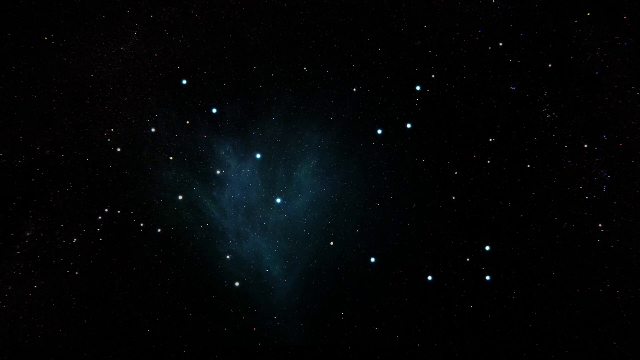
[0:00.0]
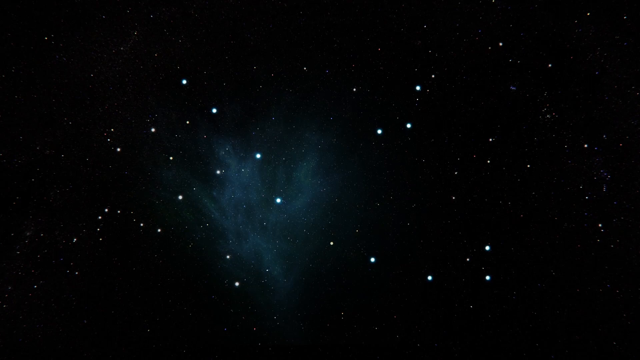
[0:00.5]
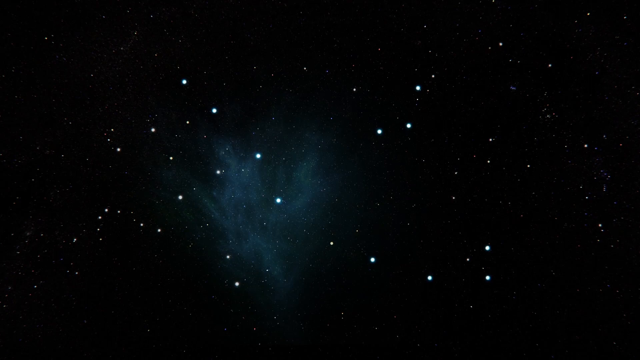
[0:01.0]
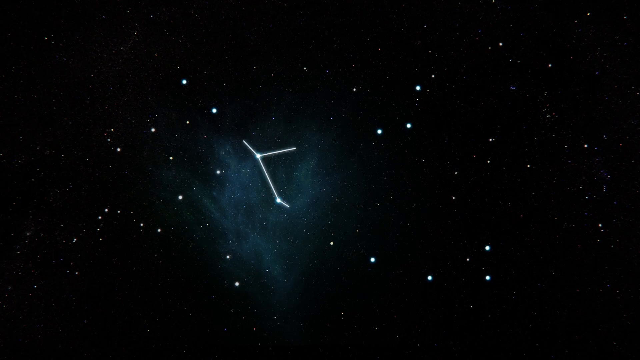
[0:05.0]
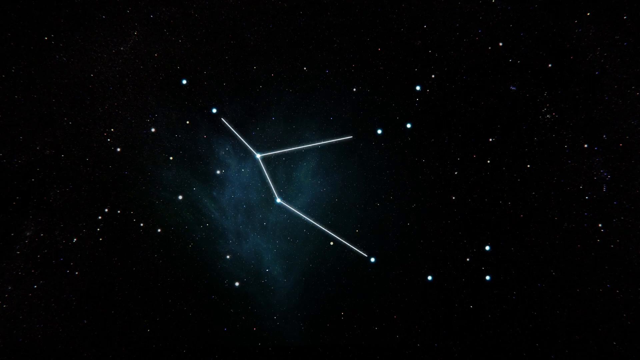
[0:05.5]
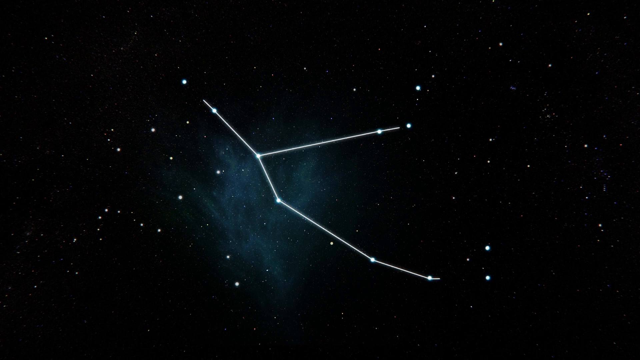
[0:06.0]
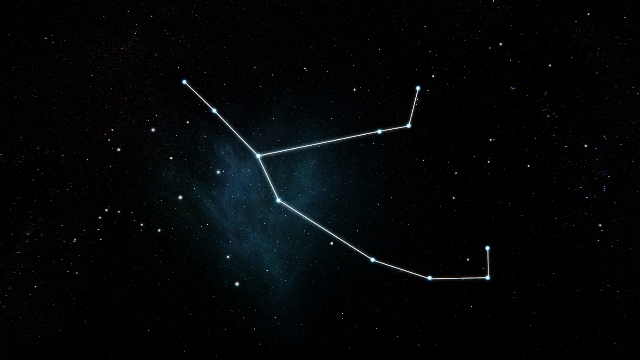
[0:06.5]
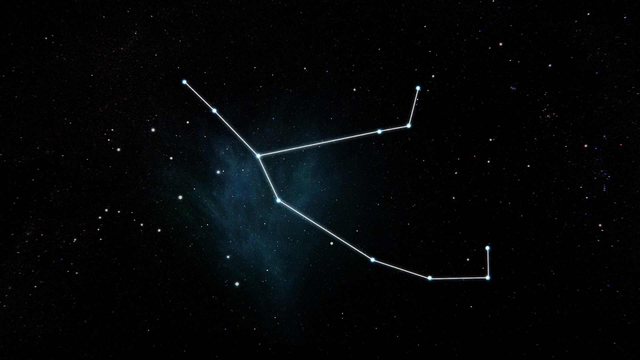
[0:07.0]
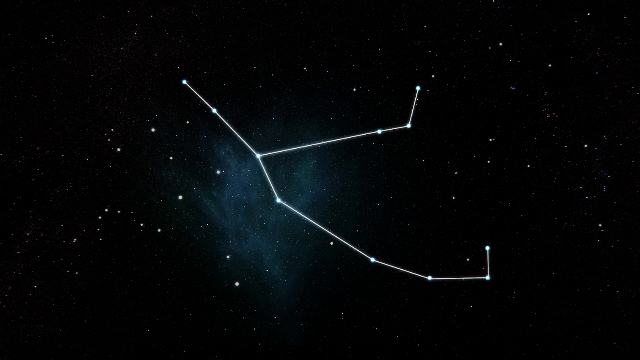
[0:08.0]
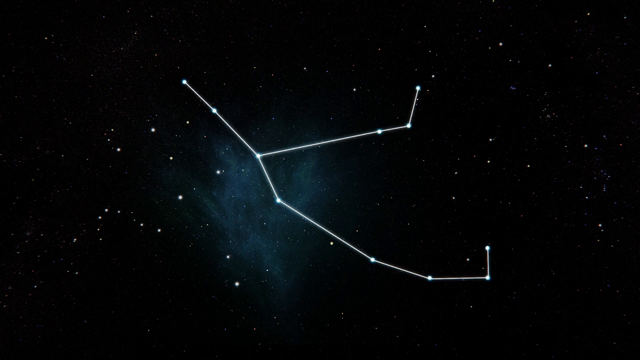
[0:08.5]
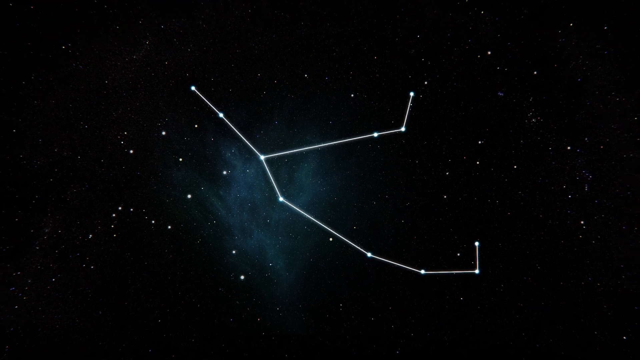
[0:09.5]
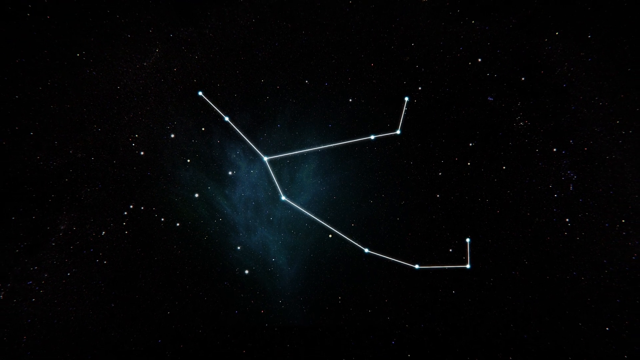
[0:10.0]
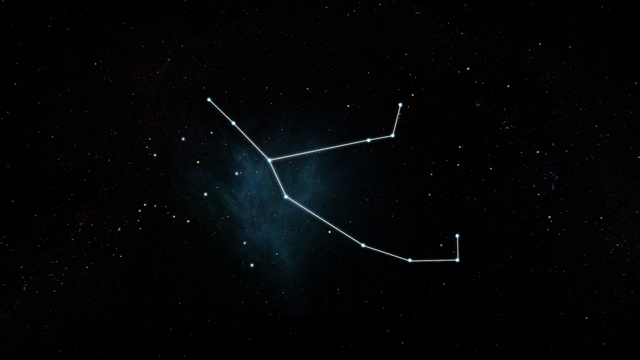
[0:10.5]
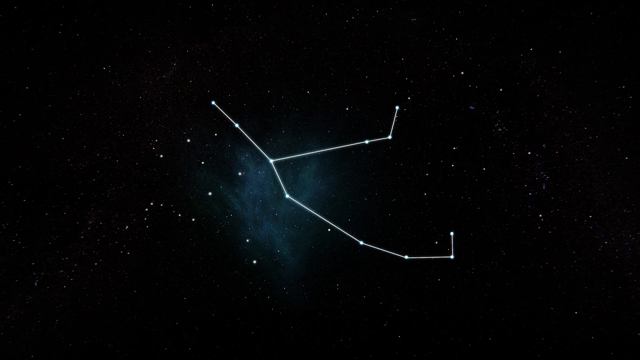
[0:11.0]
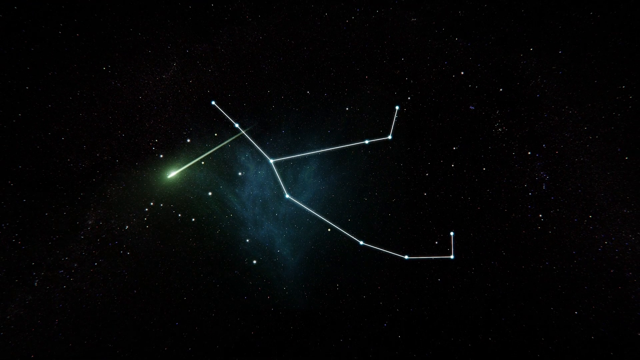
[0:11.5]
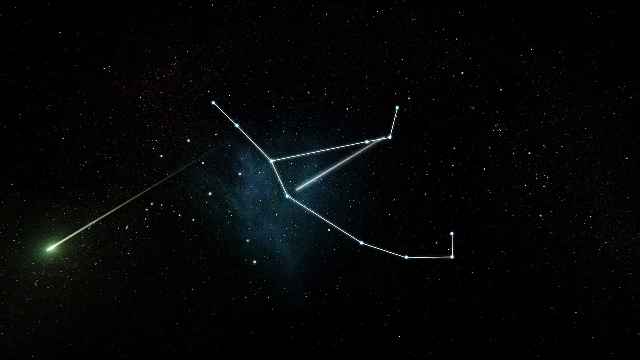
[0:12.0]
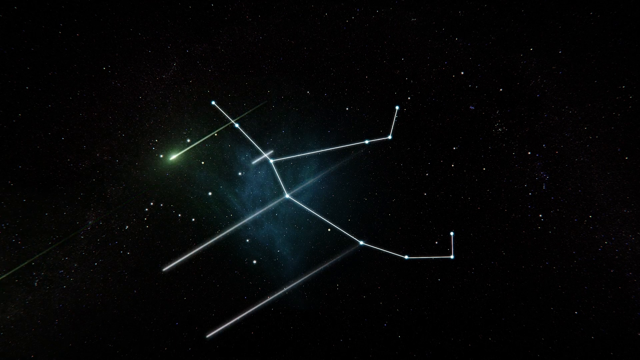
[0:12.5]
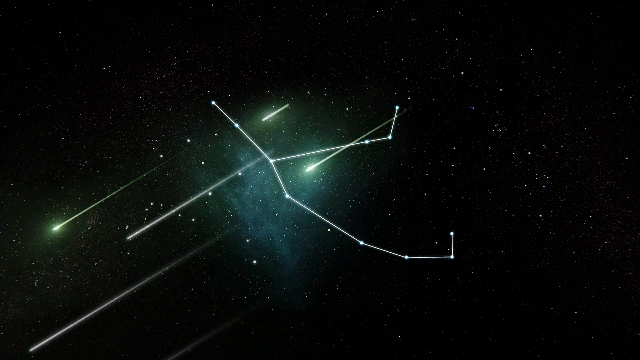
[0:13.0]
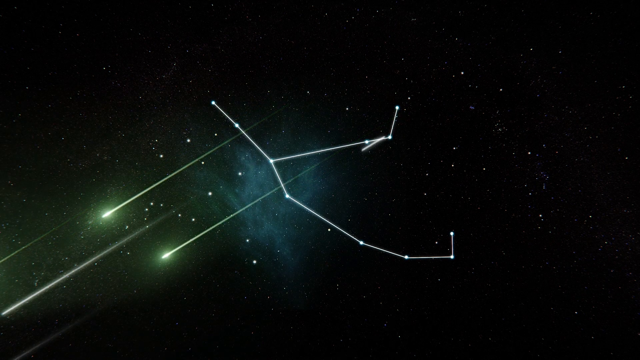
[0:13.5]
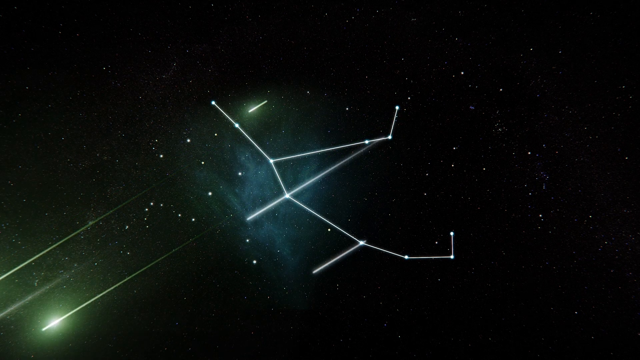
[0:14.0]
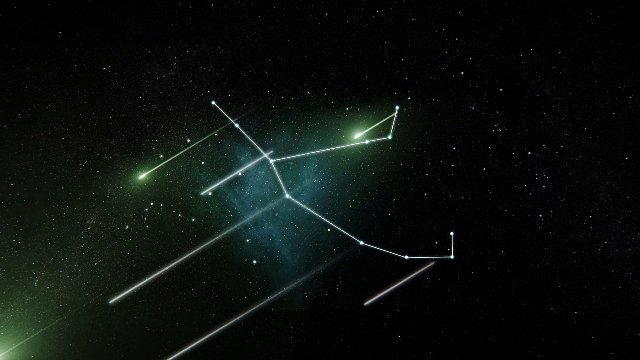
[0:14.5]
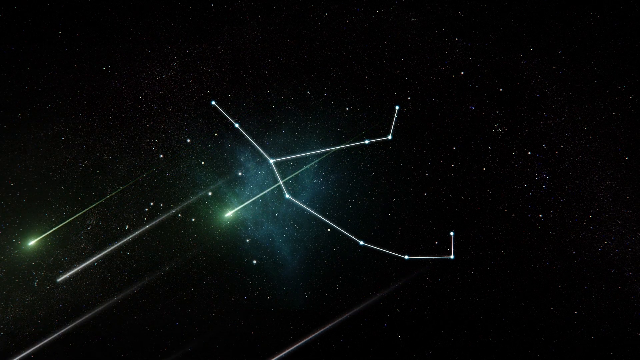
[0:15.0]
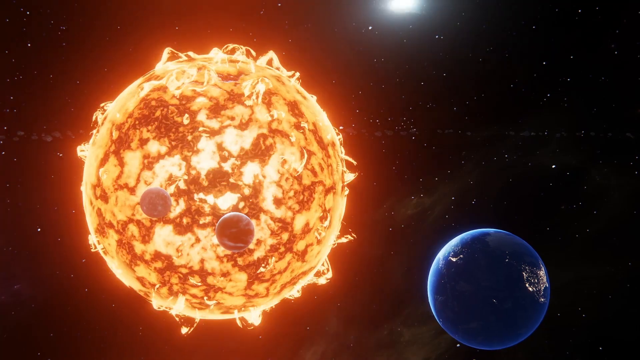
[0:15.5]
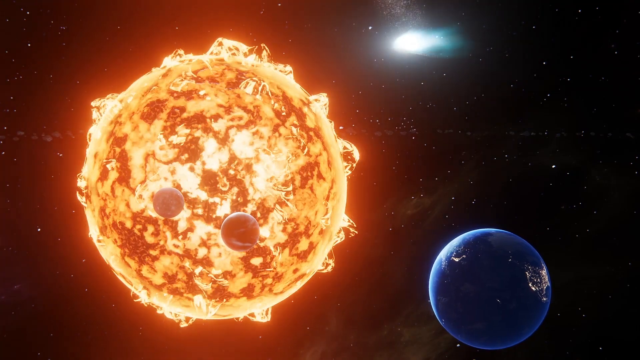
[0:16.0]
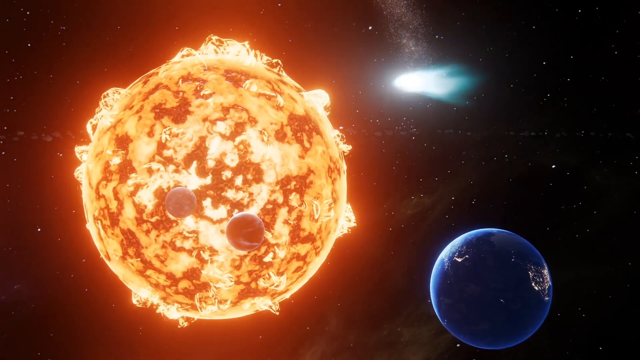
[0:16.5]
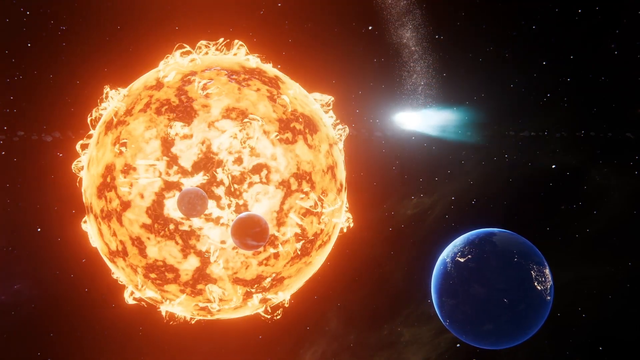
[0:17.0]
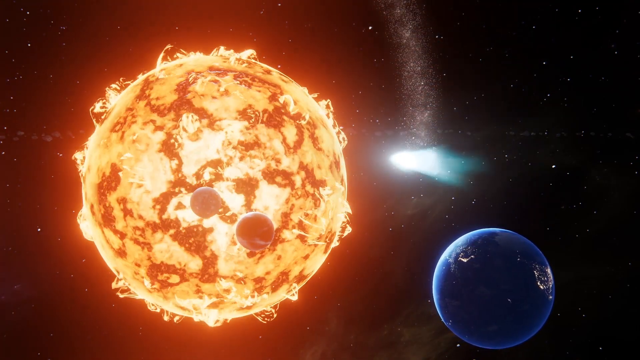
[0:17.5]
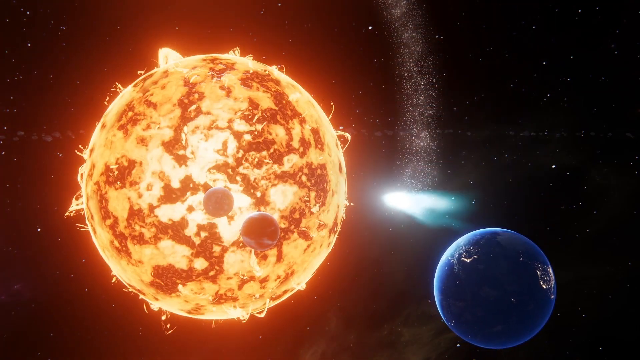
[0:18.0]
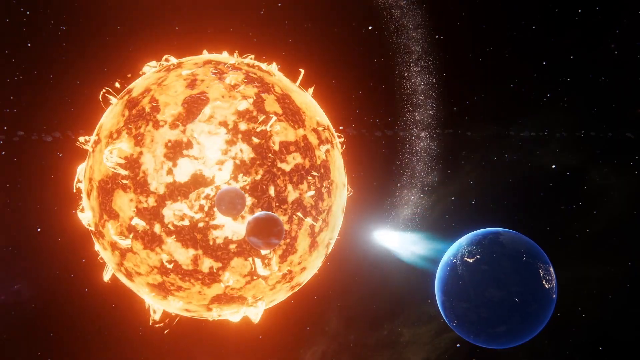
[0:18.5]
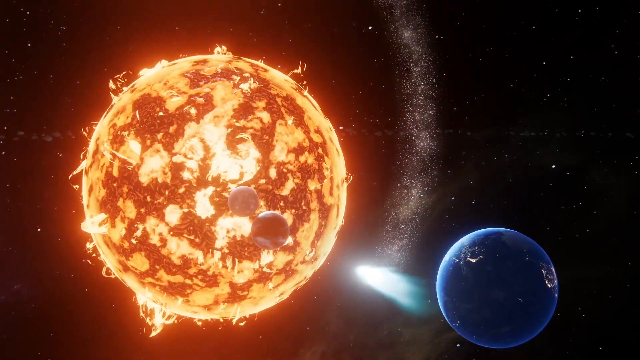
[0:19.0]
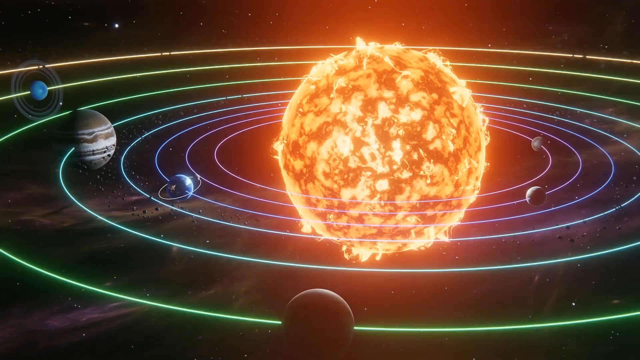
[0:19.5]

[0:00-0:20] Space is shown with a cluster of stars, apparently a constellation, and the set of stars is connected. Rays then shoot out from each individual star toward what appears to be the Sun. The Sun is shown rotating in the middle with the planets rotating around it. Something that looks like a comet comes in and falls into an orbit, seemingly around the Sun. As the view pans out, it shows the Sun in the middle with all the planets of our solar system around it. There are no words on the screen.